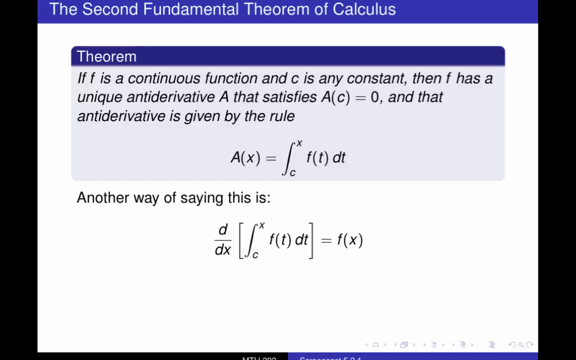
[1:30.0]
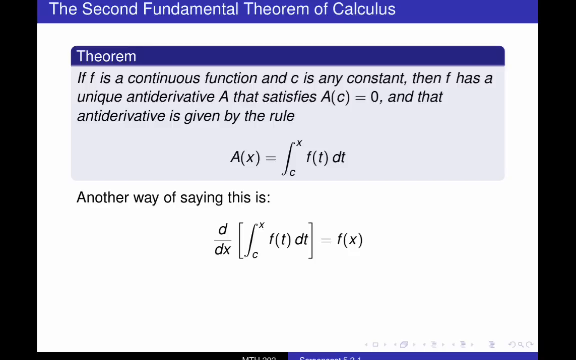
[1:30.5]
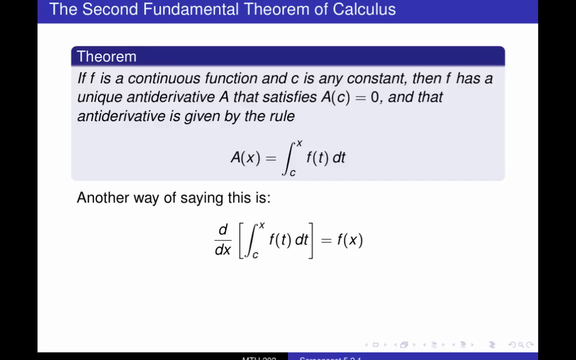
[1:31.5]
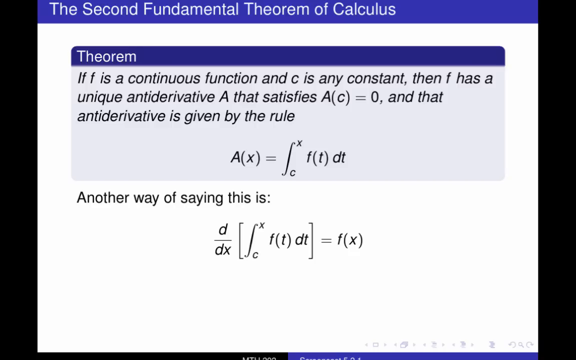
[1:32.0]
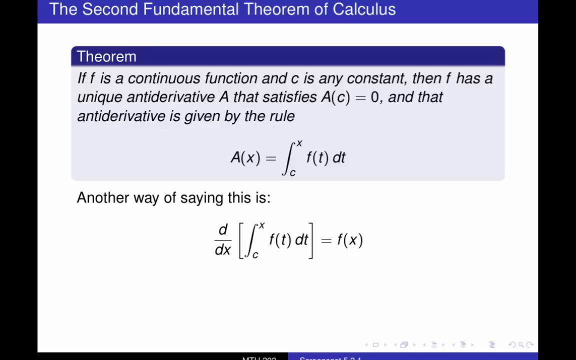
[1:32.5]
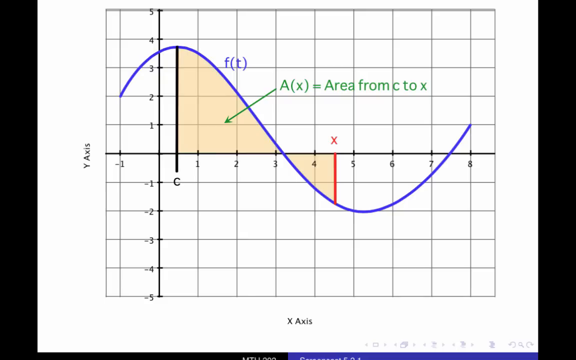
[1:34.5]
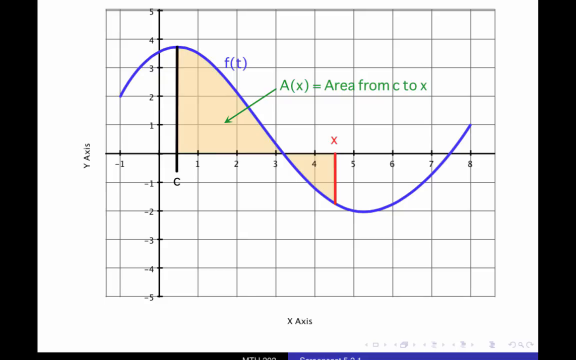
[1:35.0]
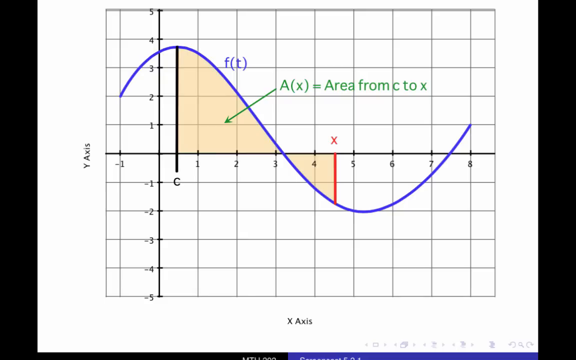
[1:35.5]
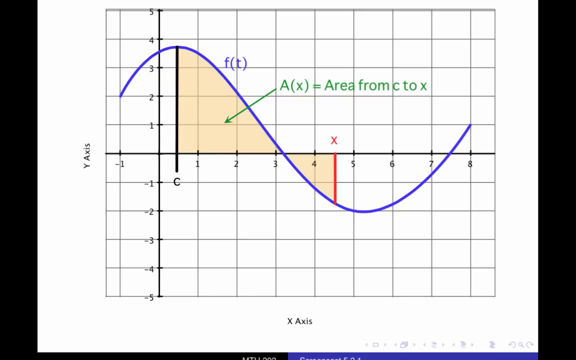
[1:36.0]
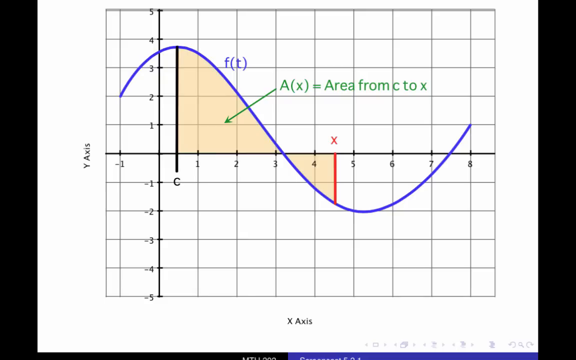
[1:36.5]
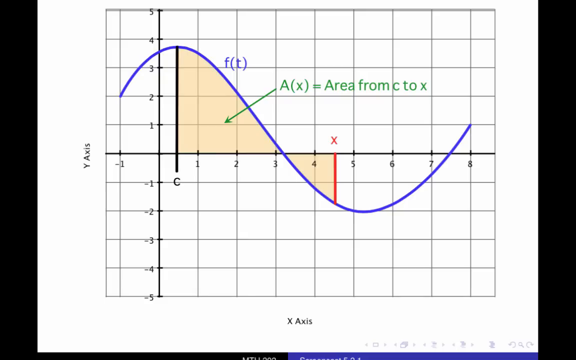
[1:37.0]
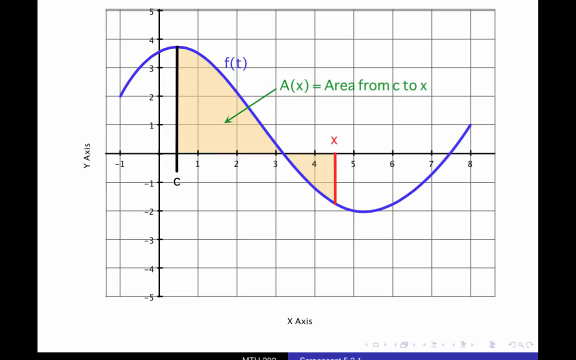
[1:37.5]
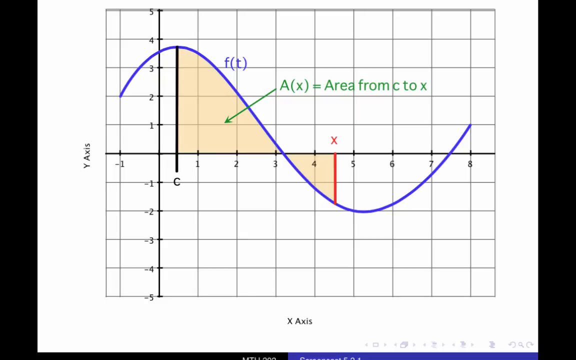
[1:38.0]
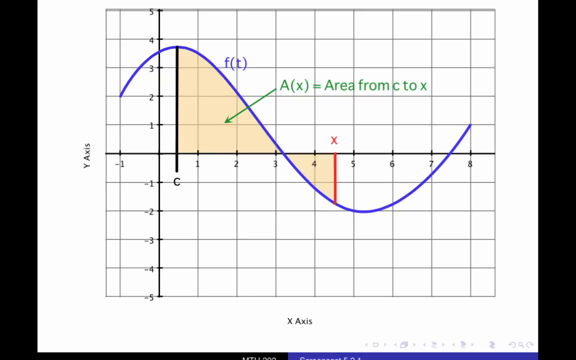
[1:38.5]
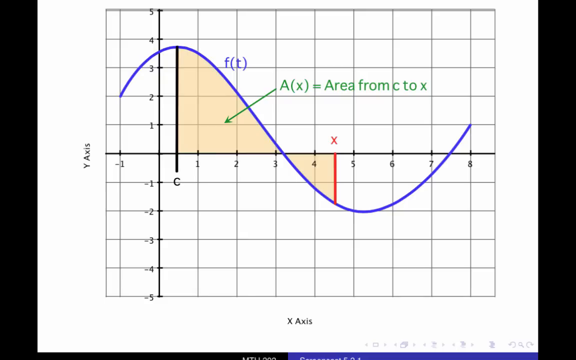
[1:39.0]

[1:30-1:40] A slideshow slide titled "The Second Fundamental Theorem of Calculus" appears. It has a subcategory labeled "Theorem" with its own shaded box containing the text "If f is a continuous function and c is any constant, then f has a unique antiderivative a that satisfies a(c) = 0, and that antiderivative is given by the rule", with the rule written out. Below the box it says "another way of saying this is" and shows a simplified version of the same formula. After a brief moment the slide changes to a graph tracking the function T and the area X from C to X. The function starts at its highest point at 3.5, dips down to -5, and rises to 1 at the end.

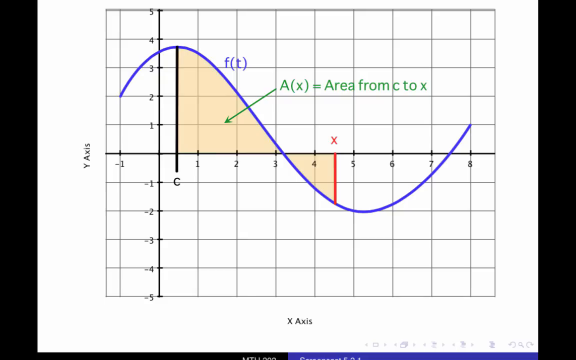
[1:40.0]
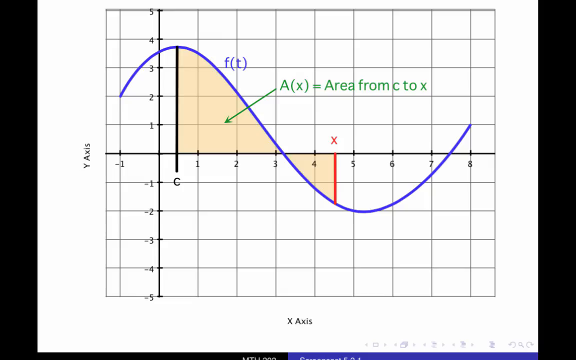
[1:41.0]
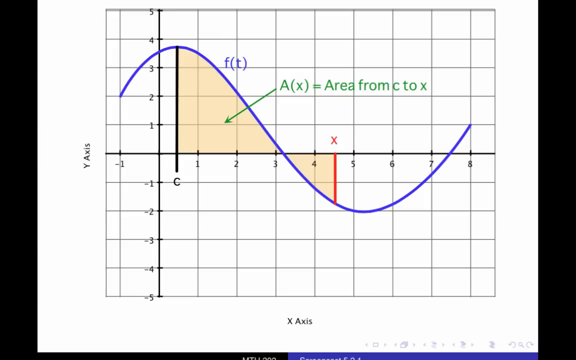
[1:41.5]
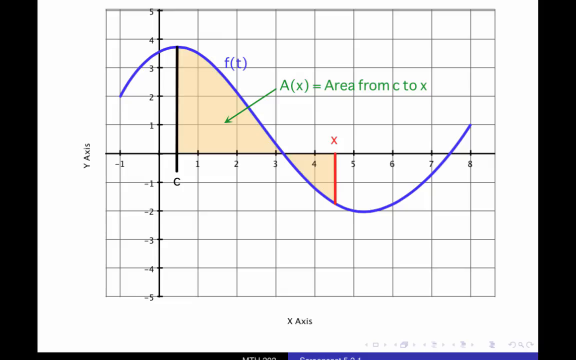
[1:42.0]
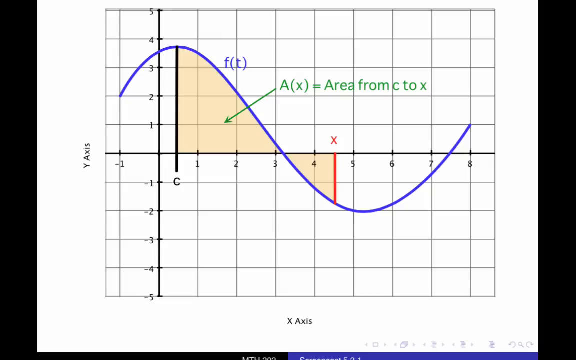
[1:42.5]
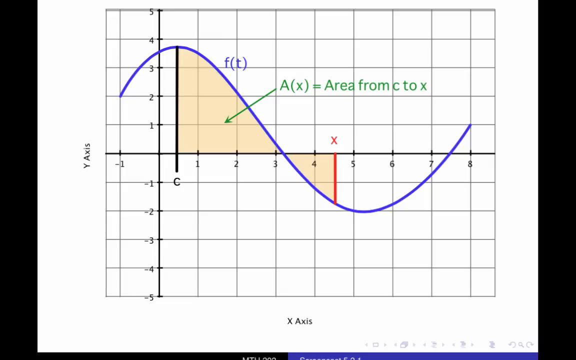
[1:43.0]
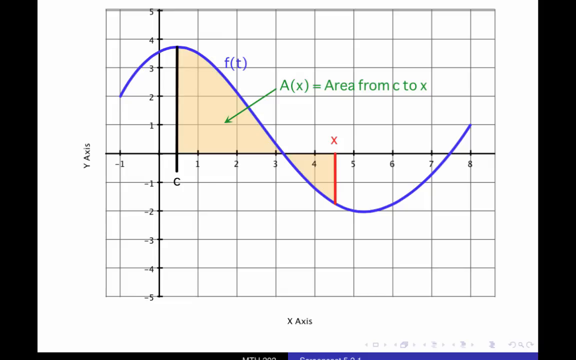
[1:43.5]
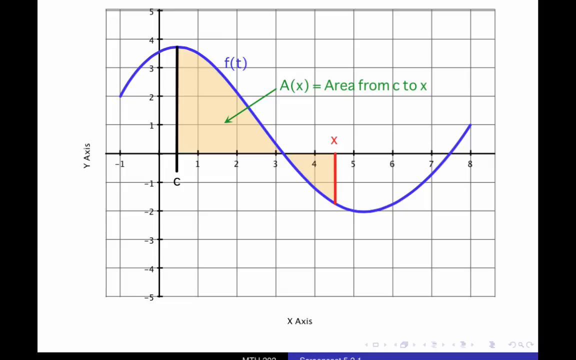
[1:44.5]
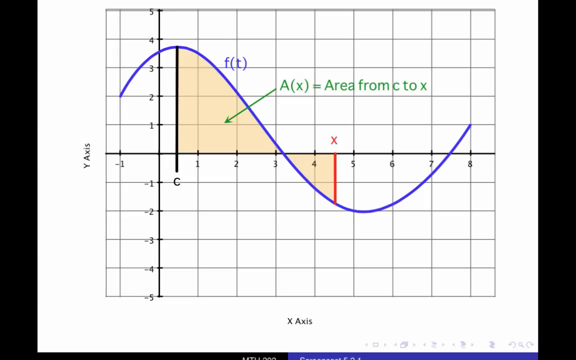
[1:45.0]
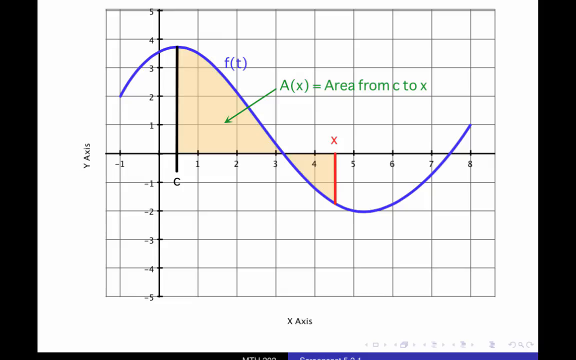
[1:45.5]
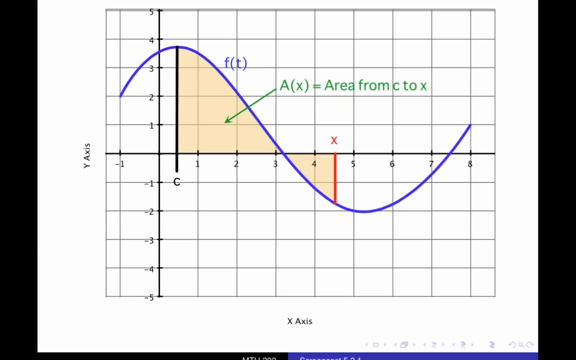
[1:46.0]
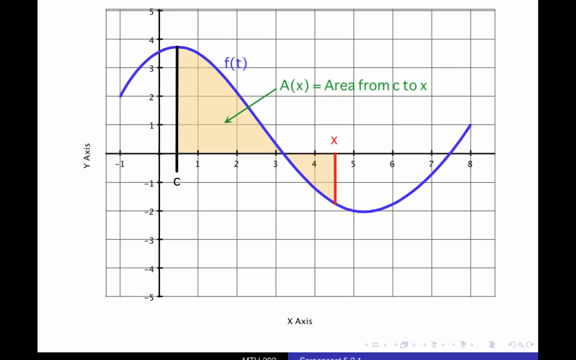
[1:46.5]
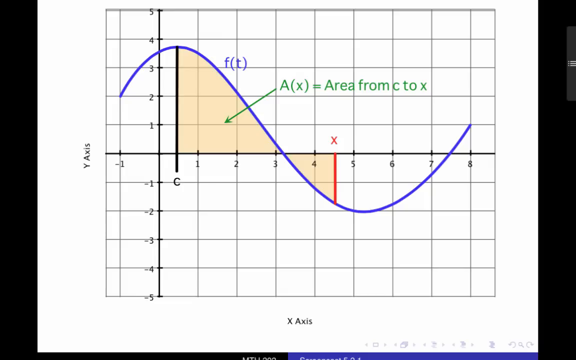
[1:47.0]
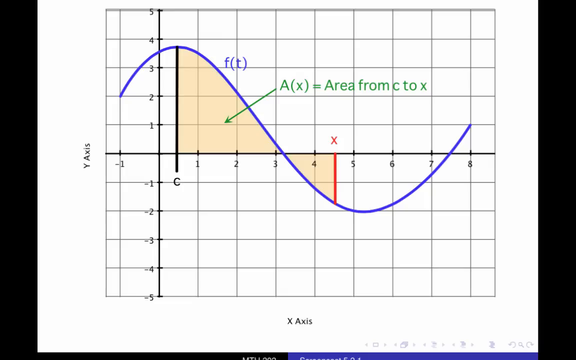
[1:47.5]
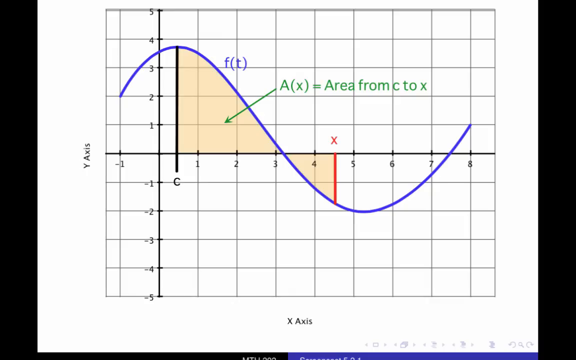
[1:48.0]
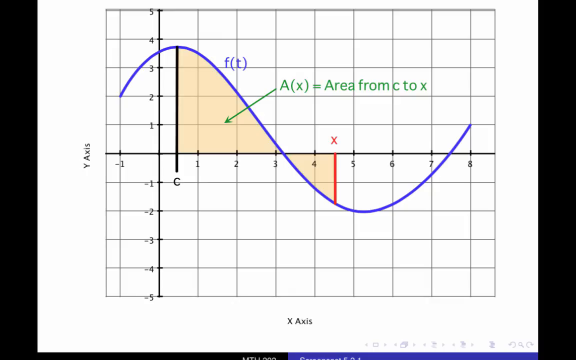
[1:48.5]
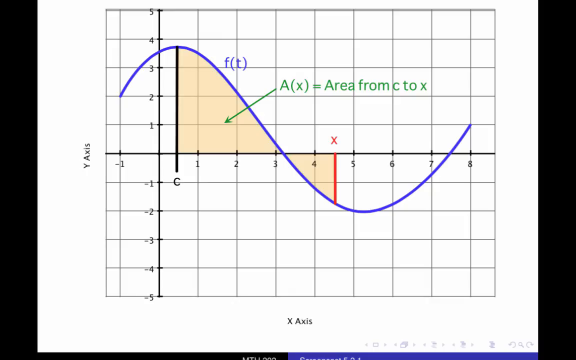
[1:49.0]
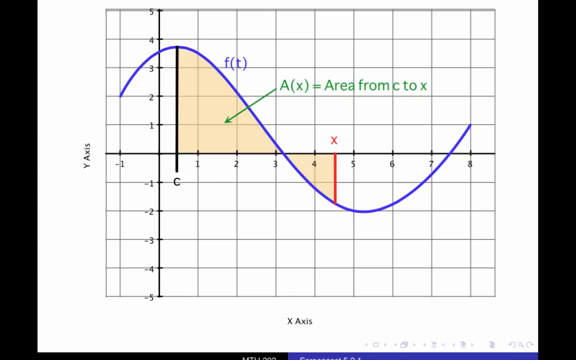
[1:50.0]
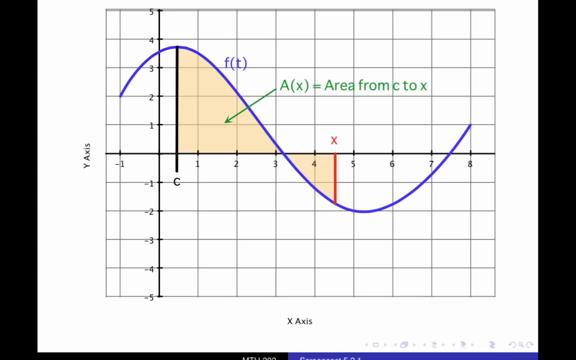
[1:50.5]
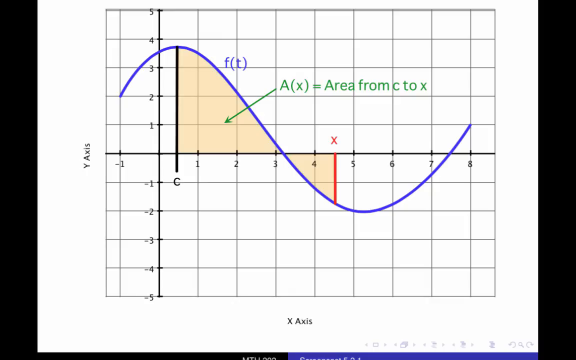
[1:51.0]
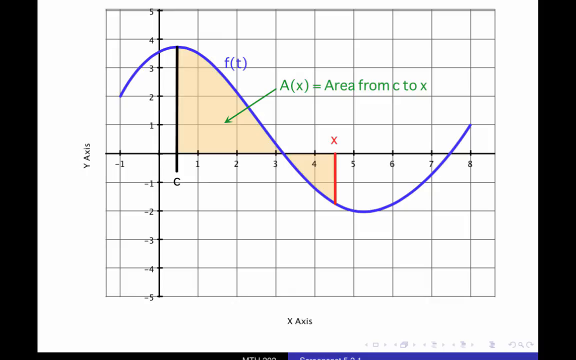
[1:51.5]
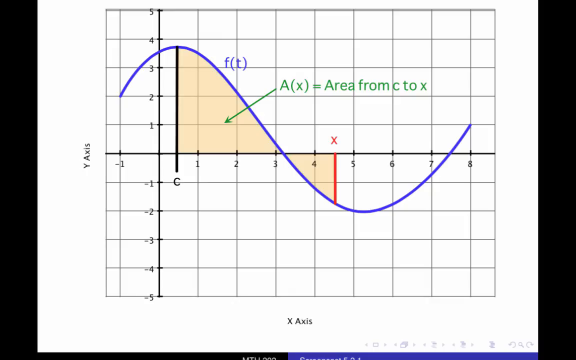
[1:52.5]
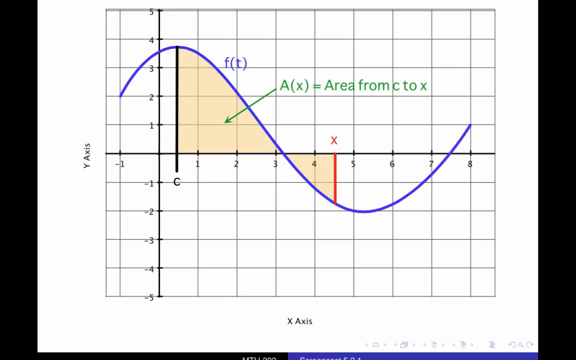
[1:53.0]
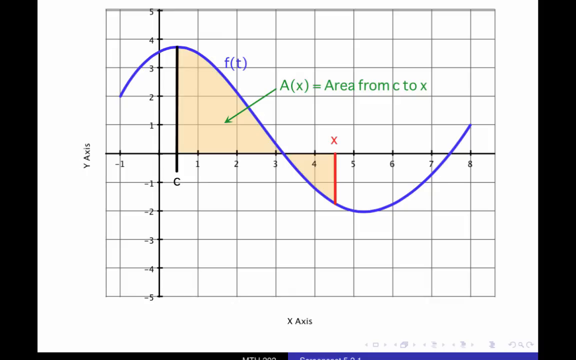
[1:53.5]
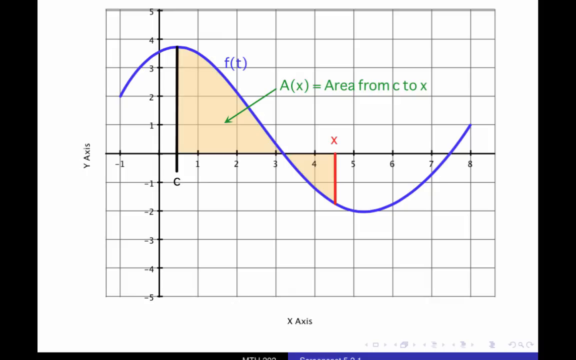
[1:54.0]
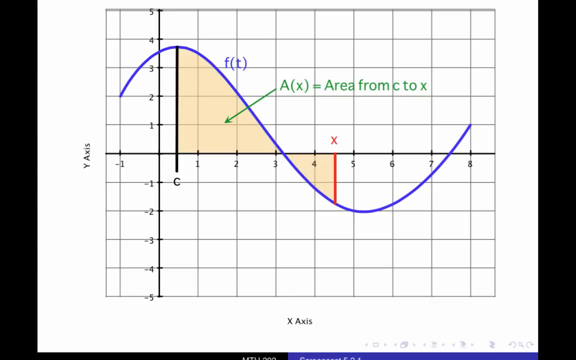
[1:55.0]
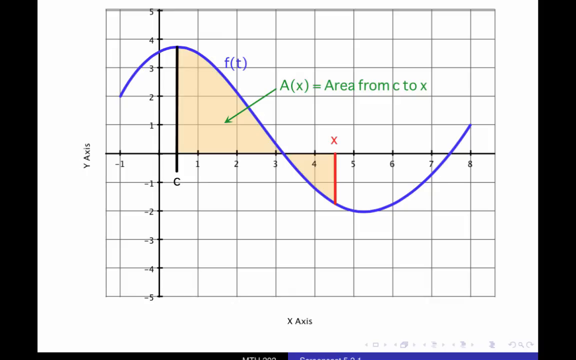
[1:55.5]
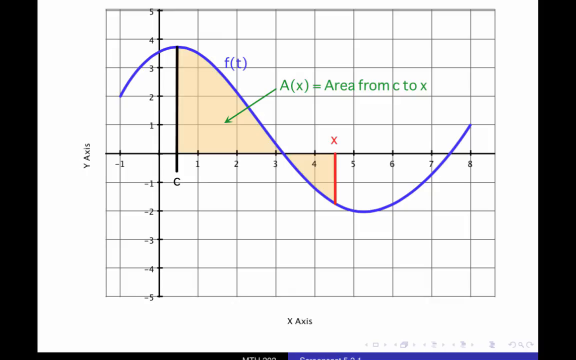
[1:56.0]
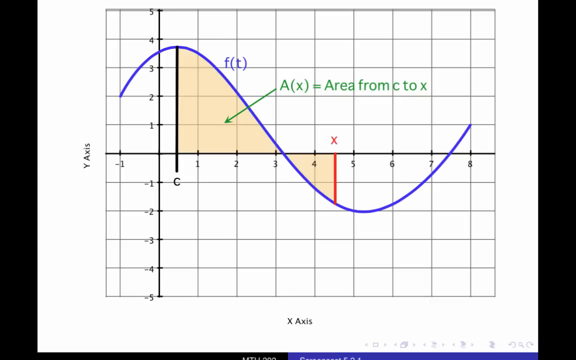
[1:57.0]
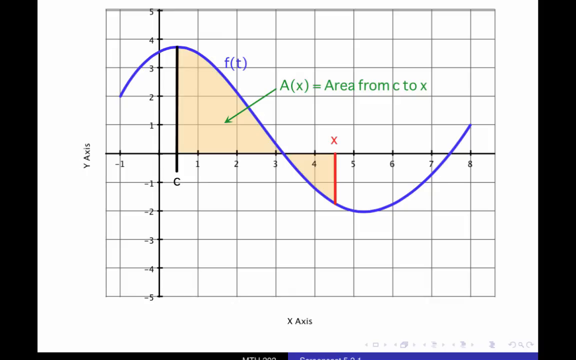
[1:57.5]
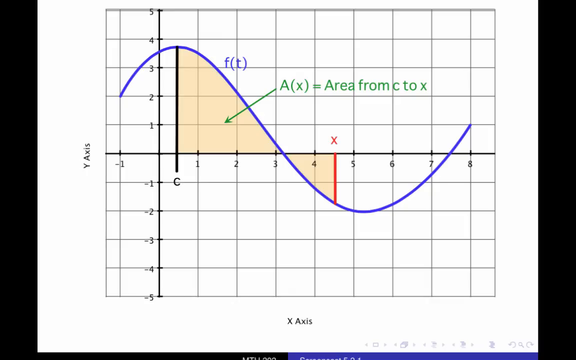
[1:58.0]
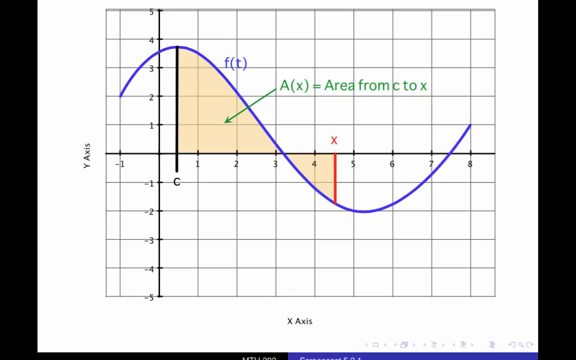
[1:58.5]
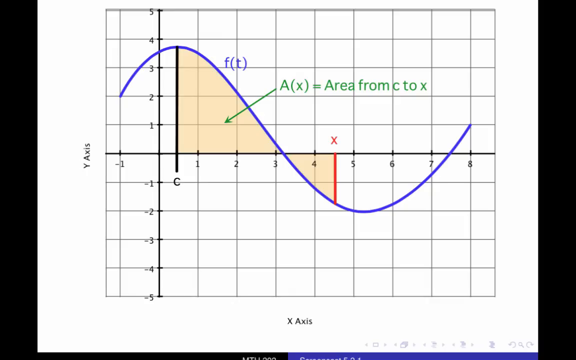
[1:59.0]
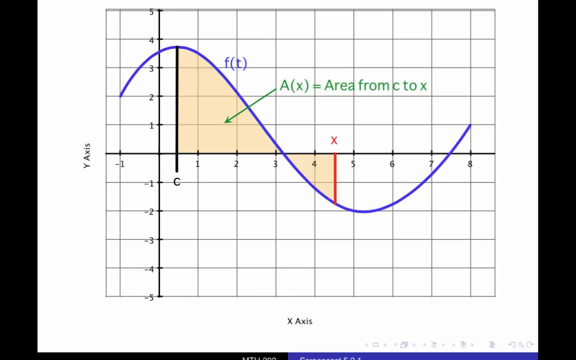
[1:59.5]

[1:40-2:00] A graph with an x- and y-axis fills the entire shot, tracking two elements labeled "F(T)" and "A(X) = area from C to X", the latter pointing to a negative space created by the tracking of F(T). X is labeled partway in the middle of the graph, between 4 and 5. C appears to start at 3.8 on the graph, which is also the highest point of F(T), with the lowest point being -2. The first point on the graph is (-1, 2), and the last point is (-8, 1). The negative space between C and X is shaded in beige. F(T) is denoted in blue, the area from C to X label is in green, and X is labeled in red.